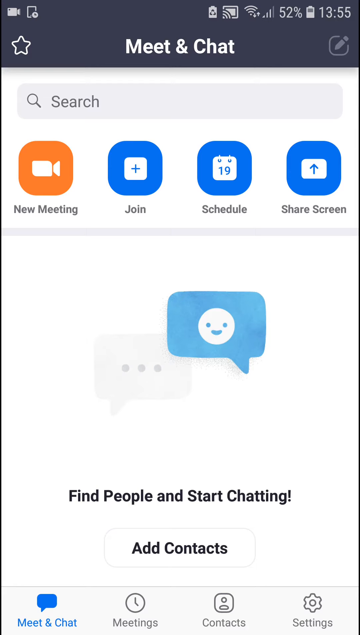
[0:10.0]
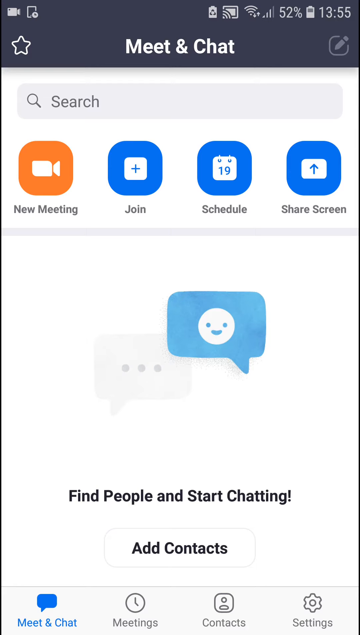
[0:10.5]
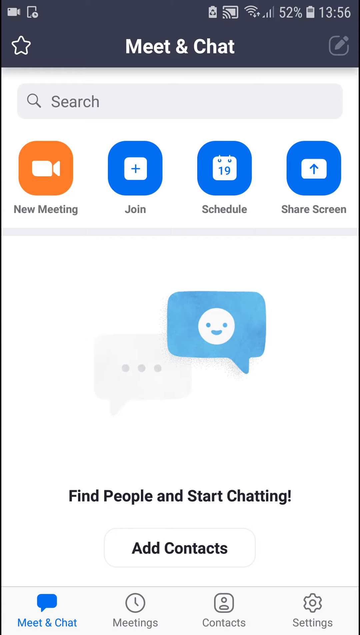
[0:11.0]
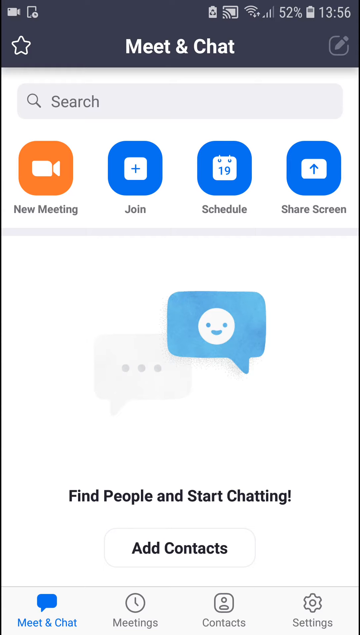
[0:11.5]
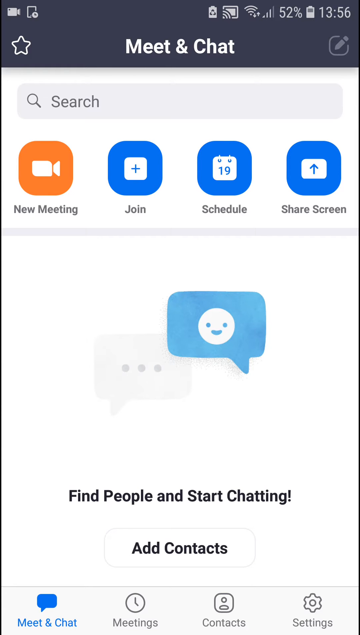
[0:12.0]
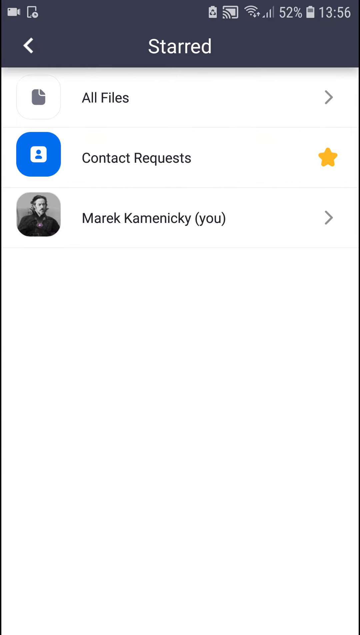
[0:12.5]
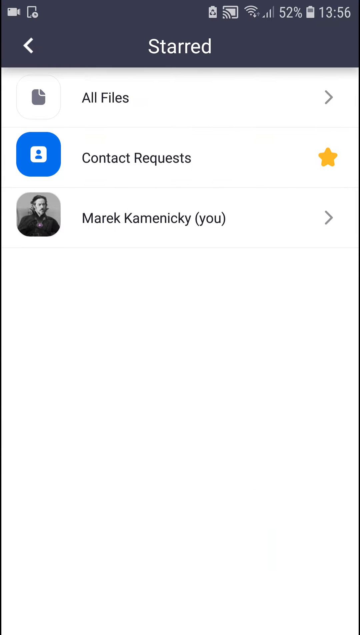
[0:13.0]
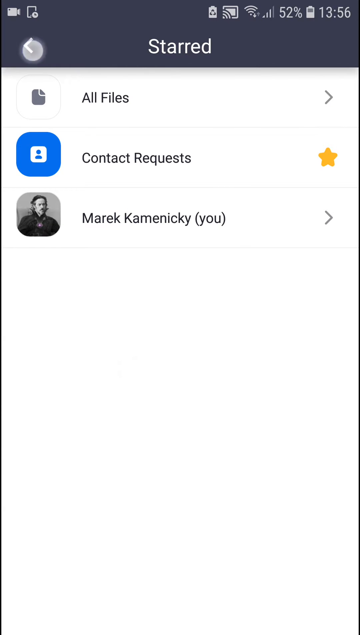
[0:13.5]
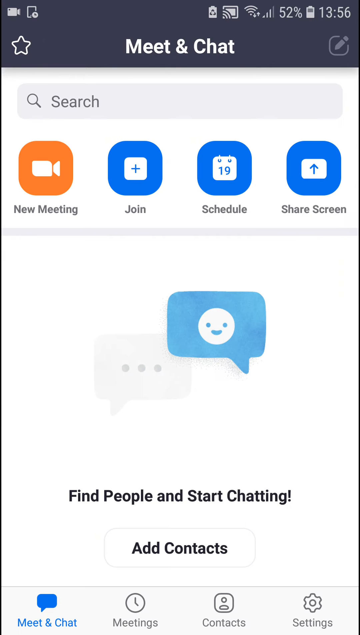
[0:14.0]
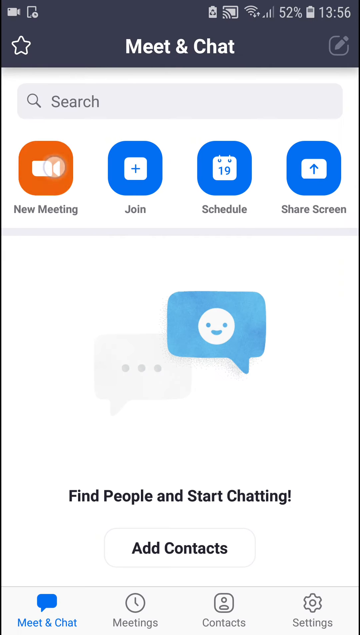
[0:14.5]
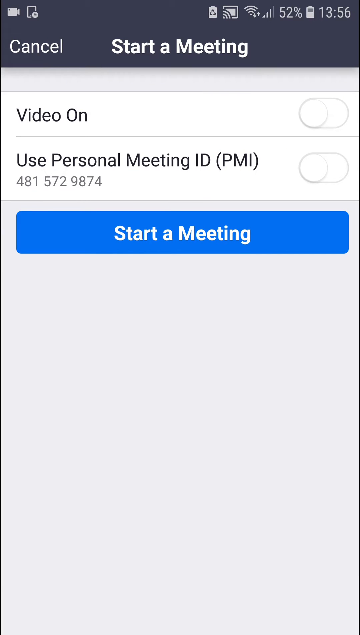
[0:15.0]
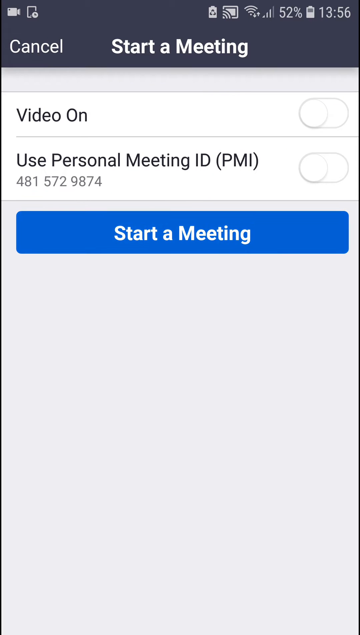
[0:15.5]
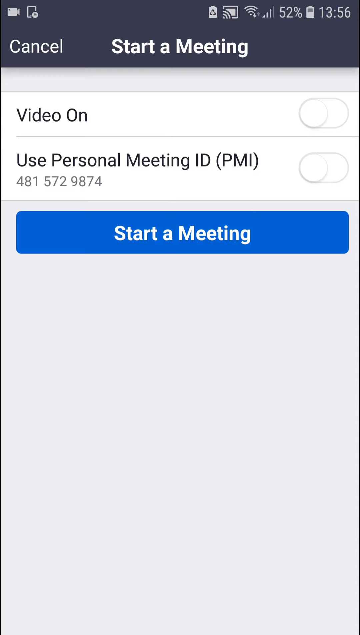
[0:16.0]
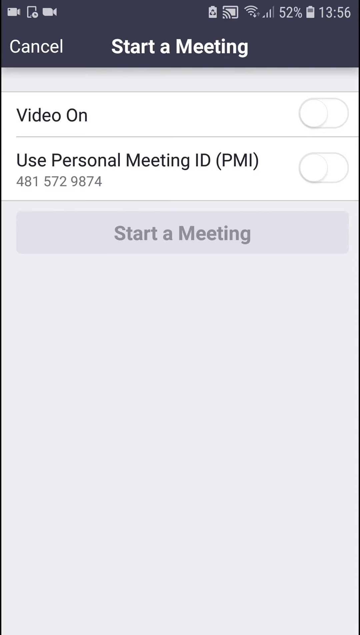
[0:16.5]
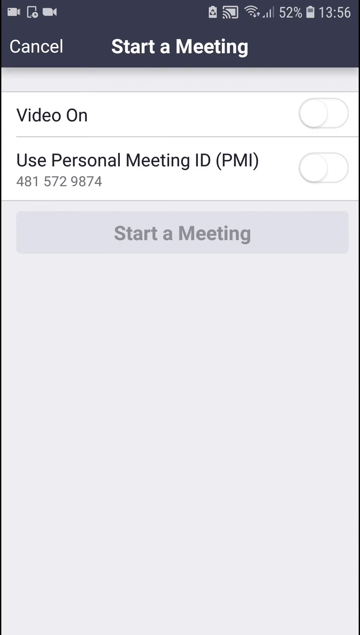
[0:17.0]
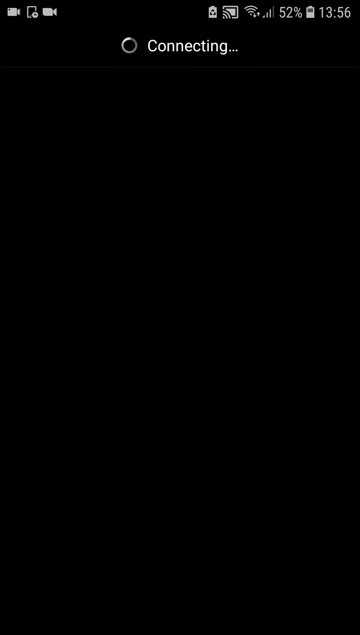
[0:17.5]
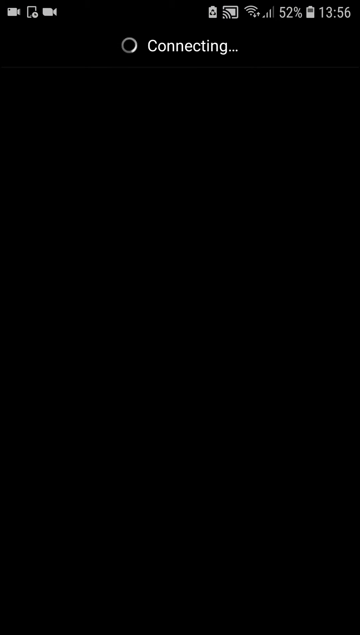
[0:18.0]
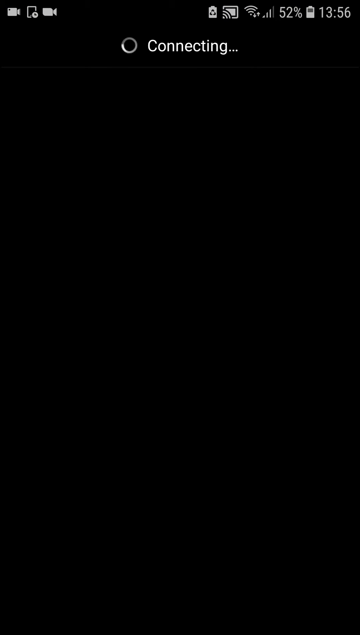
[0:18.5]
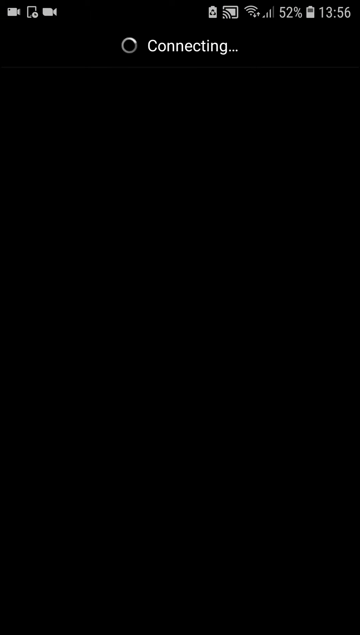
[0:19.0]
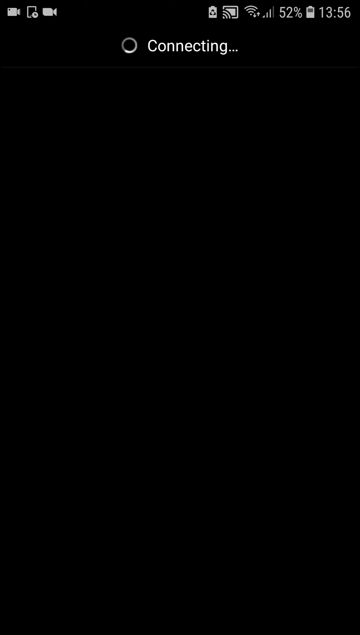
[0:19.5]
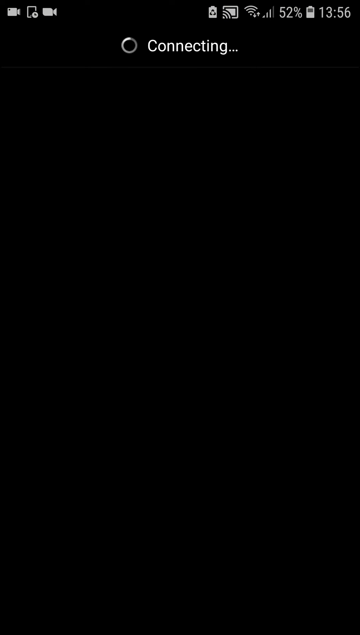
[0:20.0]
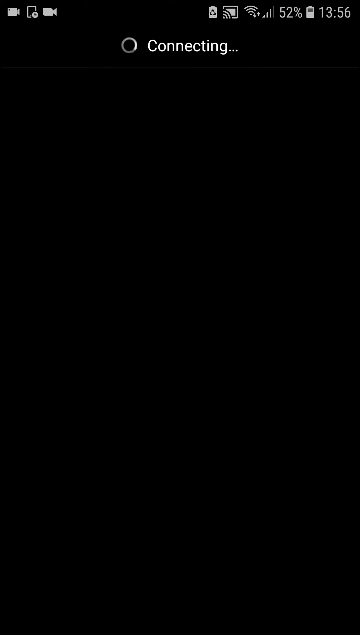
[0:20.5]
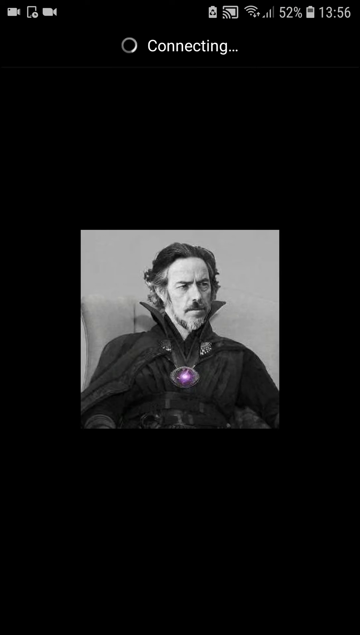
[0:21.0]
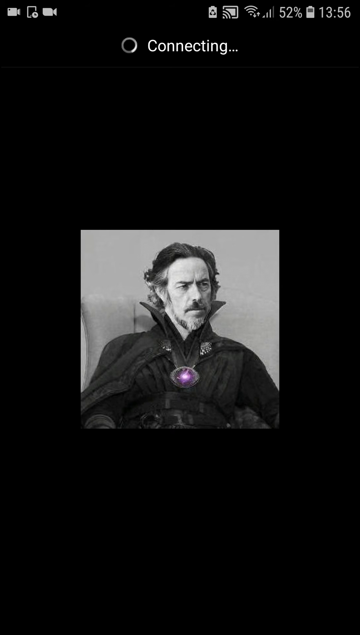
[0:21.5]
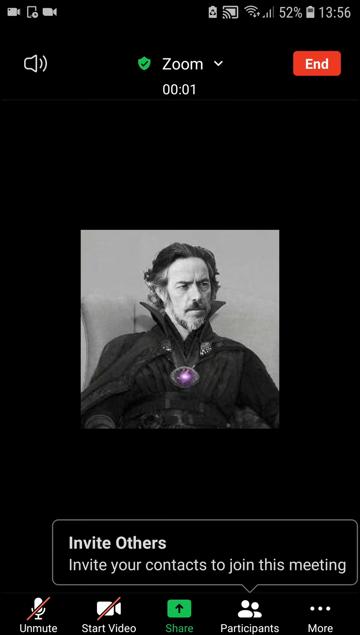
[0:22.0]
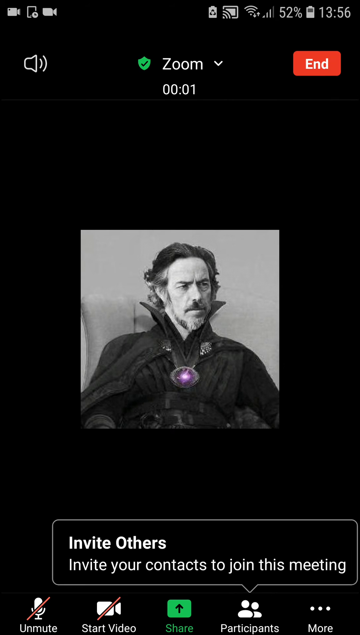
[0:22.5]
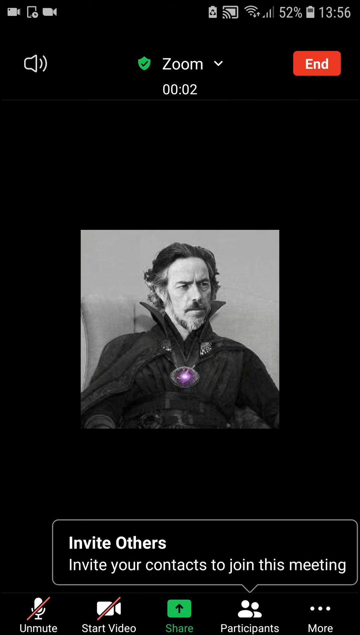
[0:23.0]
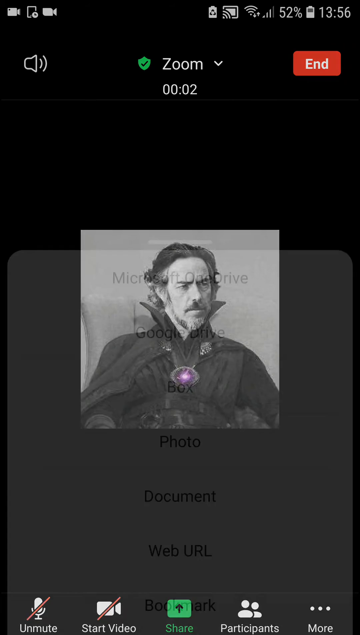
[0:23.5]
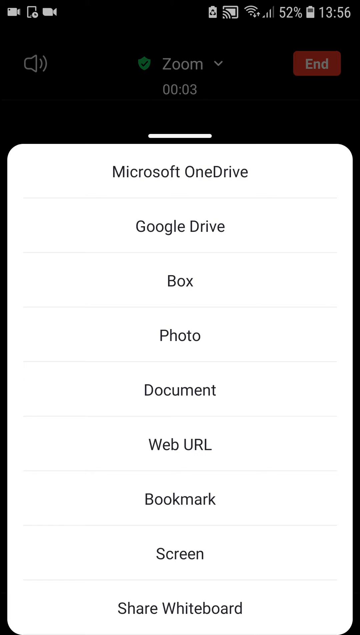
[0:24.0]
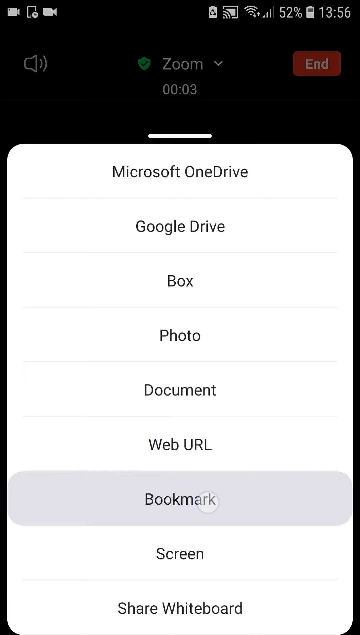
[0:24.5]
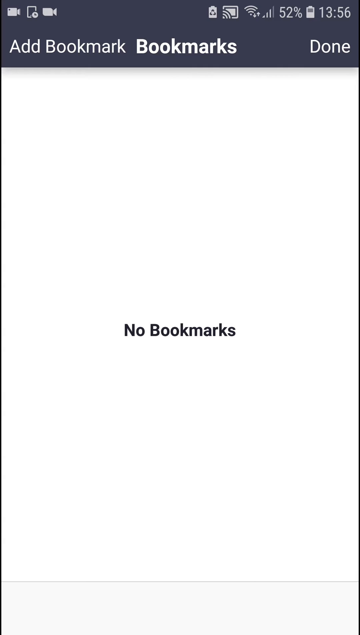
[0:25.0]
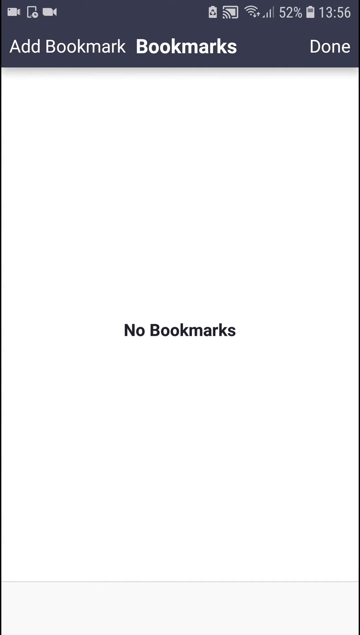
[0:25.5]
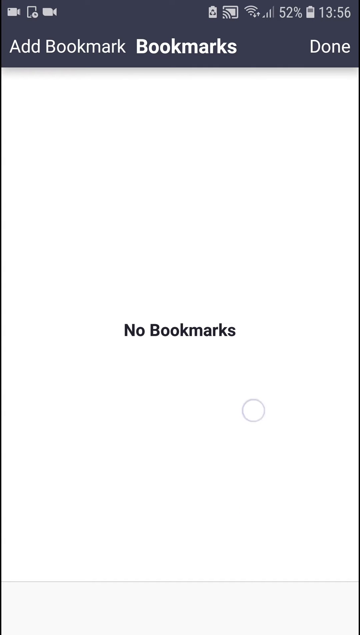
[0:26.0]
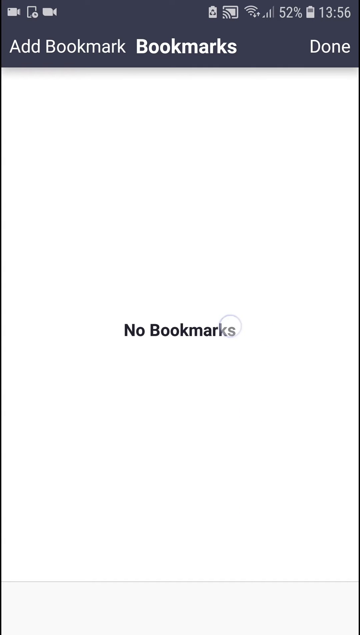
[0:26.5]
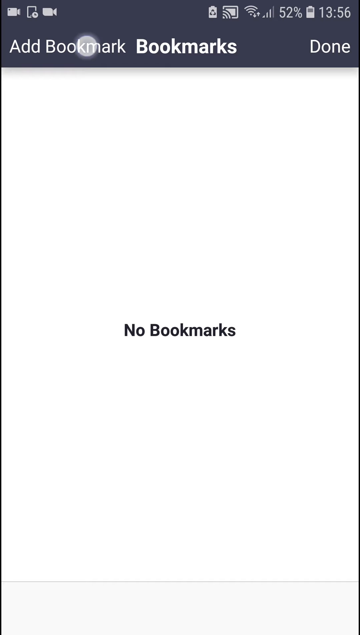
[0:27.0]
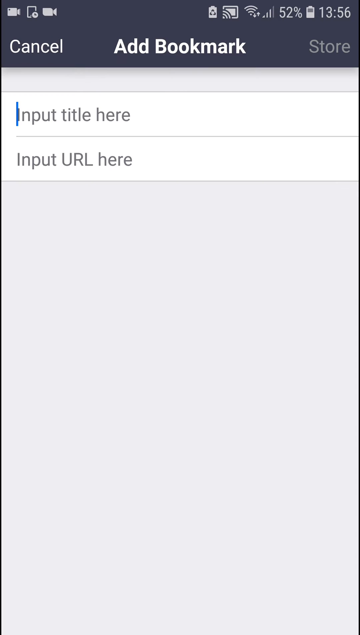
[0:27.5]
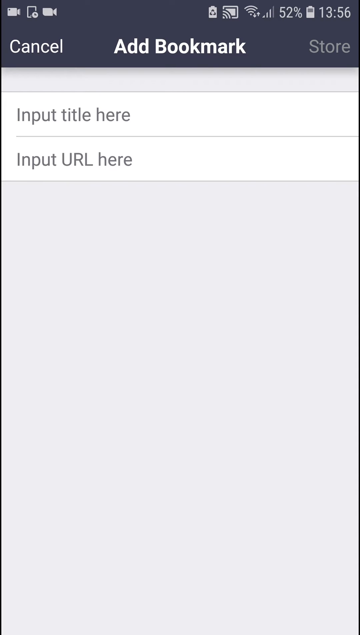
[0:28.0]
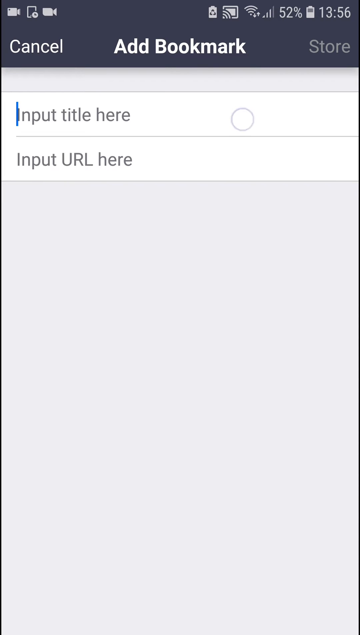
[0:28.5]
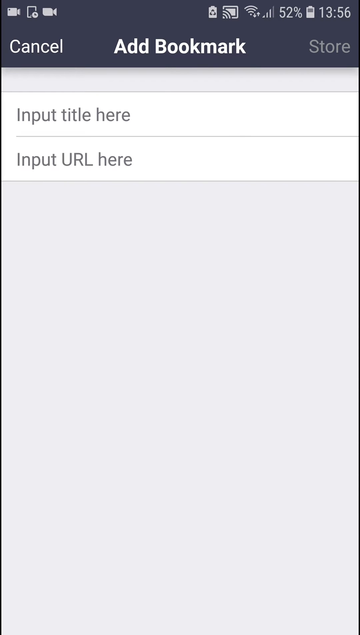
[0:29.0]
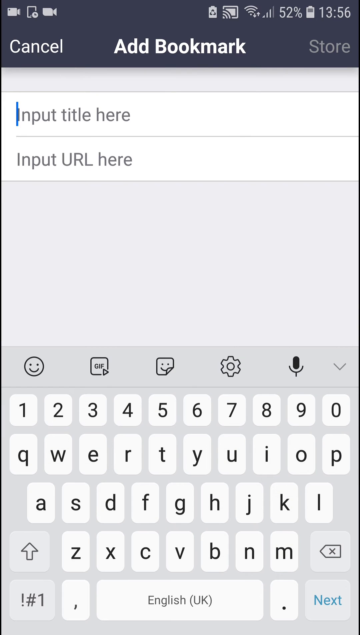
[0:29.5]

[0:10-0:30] The phone screen shows Meet & Chat again, and a star is tapped, opening a starred contact. The contact has a black and white picture, the name Merrick, and a contact request with a yellow star. The screen then goes to starting a meeting, with options to cancel, turn video on, or use a personal meeting ID (PMI). The start-a-meeting option is blacked out. The app then connects, showing a black screen with white text. Zoom pops up, with a green icon next to the Zoom icon and white letters, and the chat shows a black and white picture of a man wearing a purple necklace. Another menu then pops up for bookmarking, showing that there are no bookmarks.